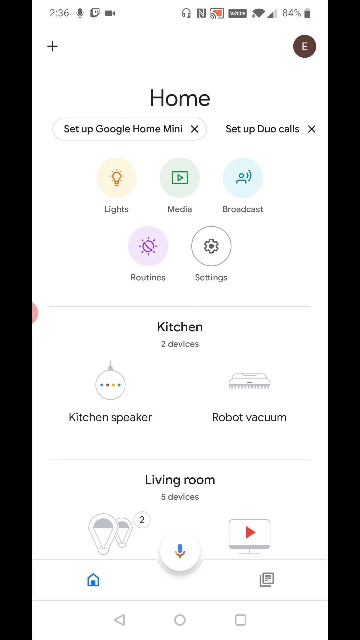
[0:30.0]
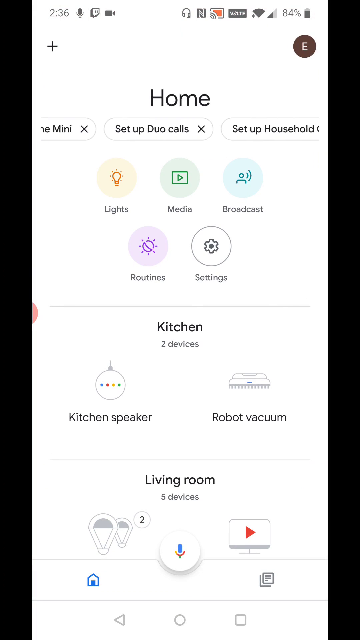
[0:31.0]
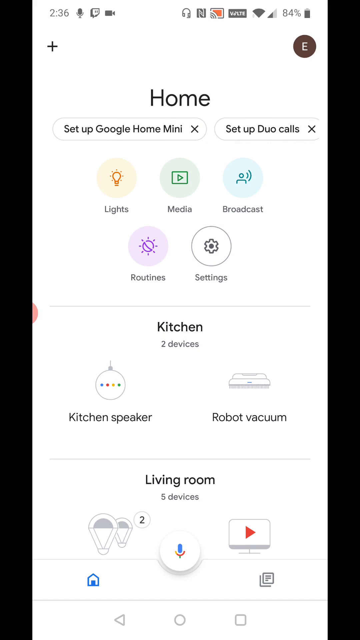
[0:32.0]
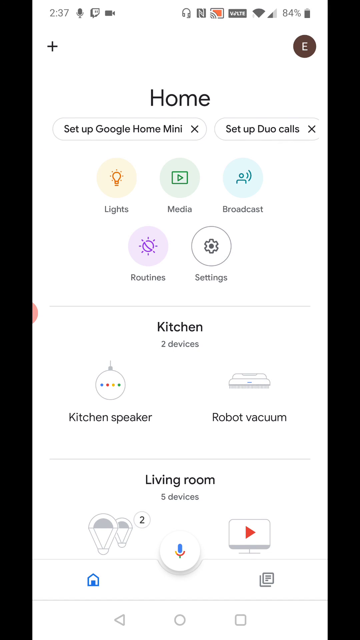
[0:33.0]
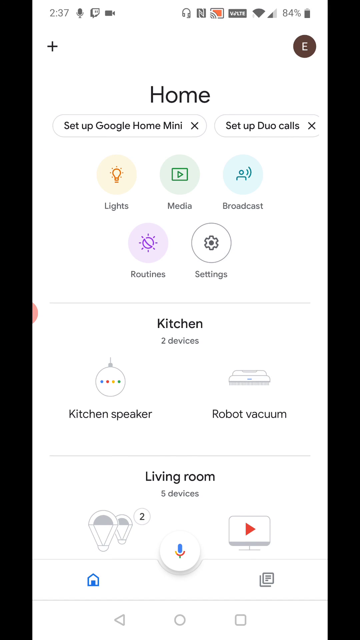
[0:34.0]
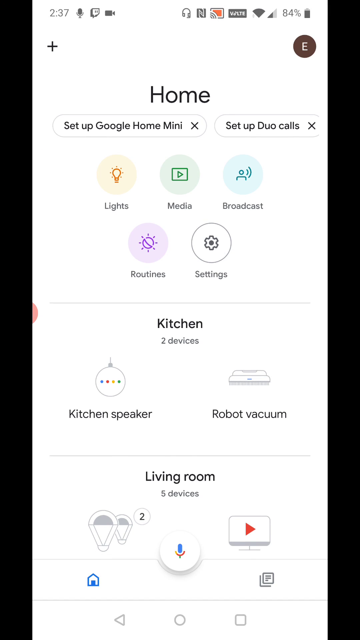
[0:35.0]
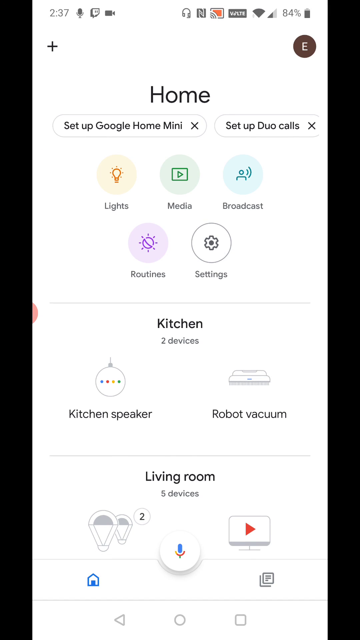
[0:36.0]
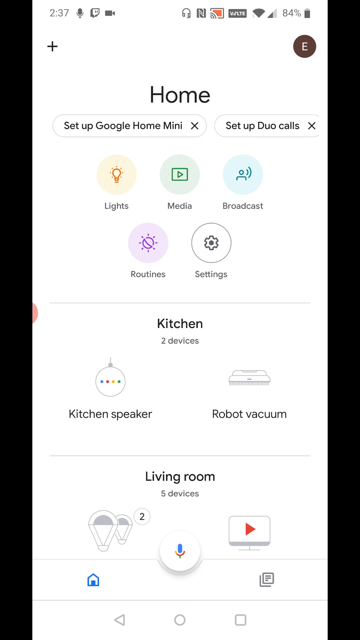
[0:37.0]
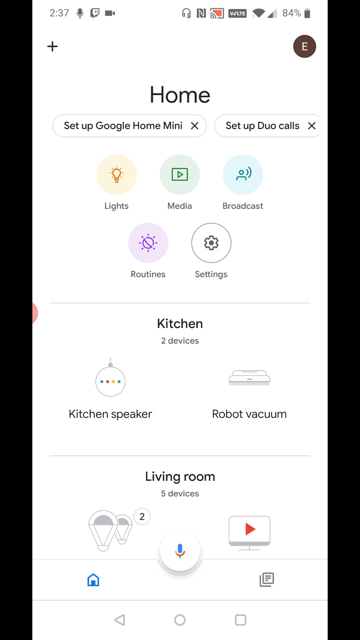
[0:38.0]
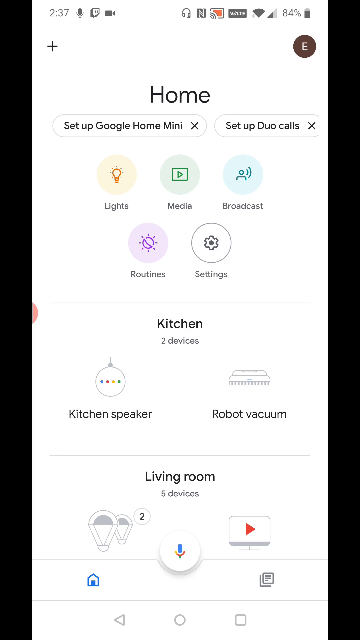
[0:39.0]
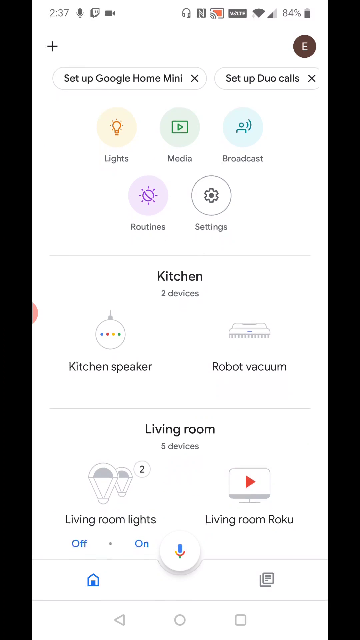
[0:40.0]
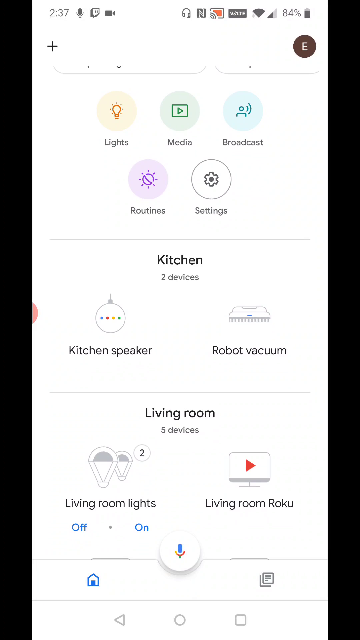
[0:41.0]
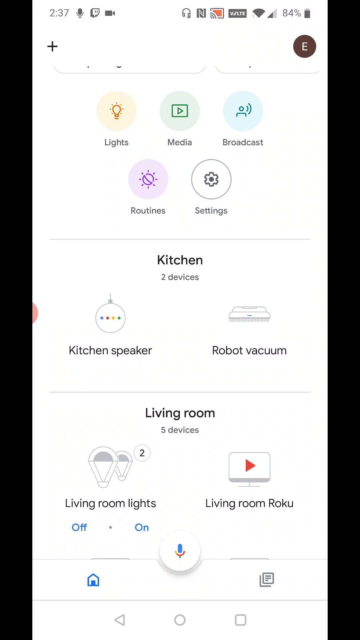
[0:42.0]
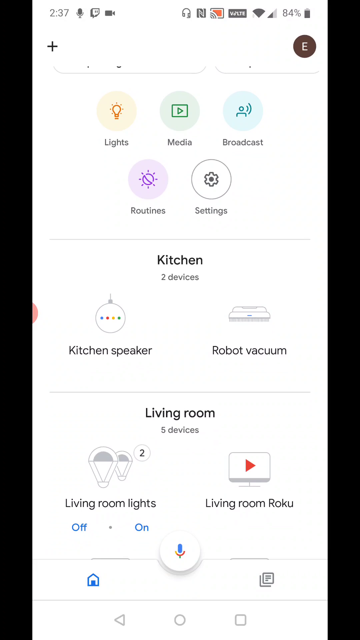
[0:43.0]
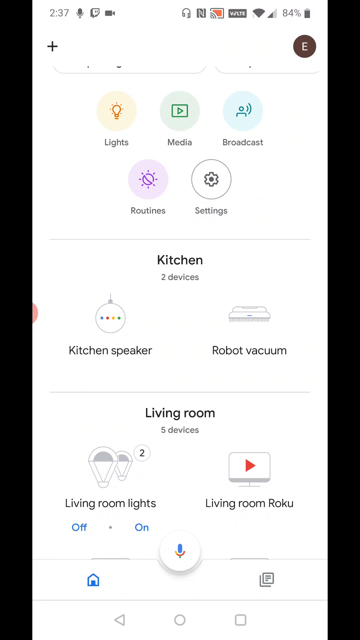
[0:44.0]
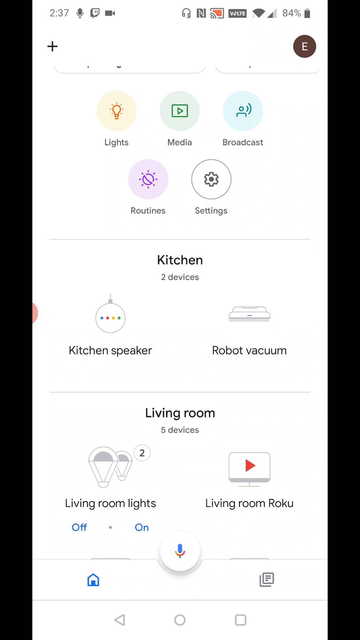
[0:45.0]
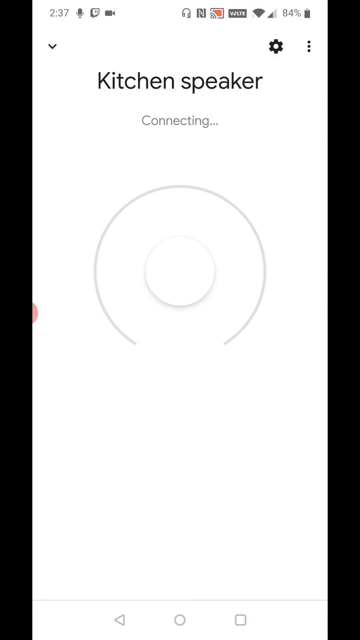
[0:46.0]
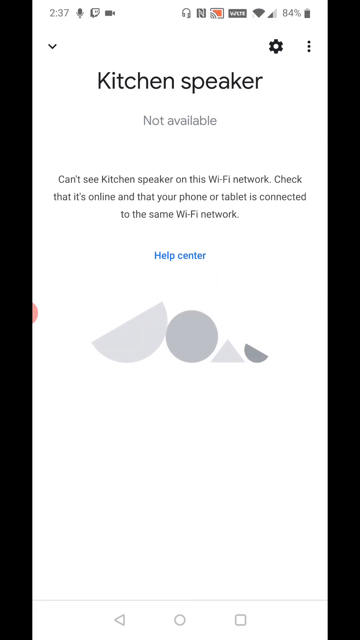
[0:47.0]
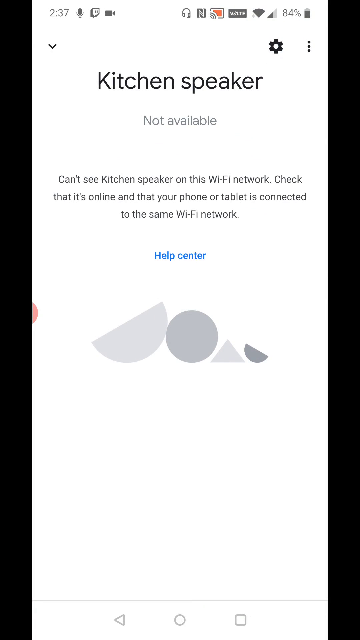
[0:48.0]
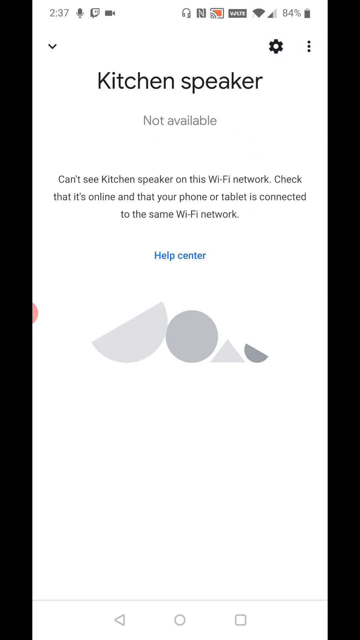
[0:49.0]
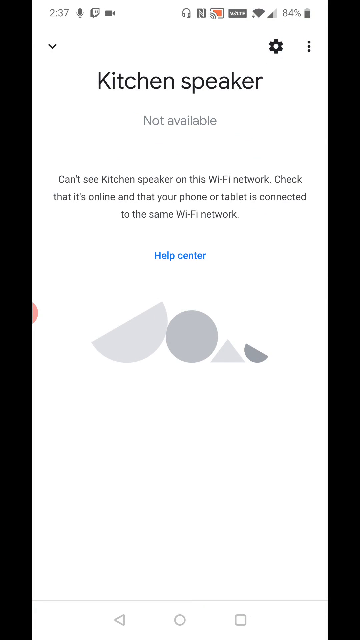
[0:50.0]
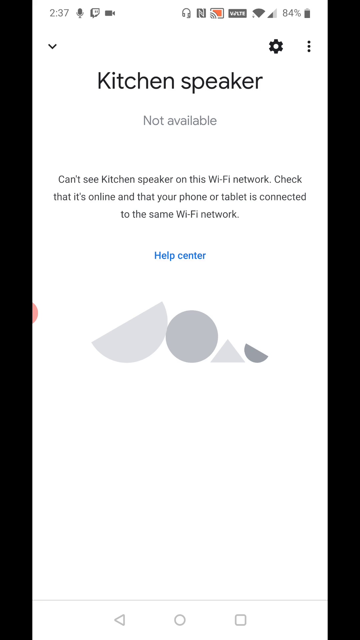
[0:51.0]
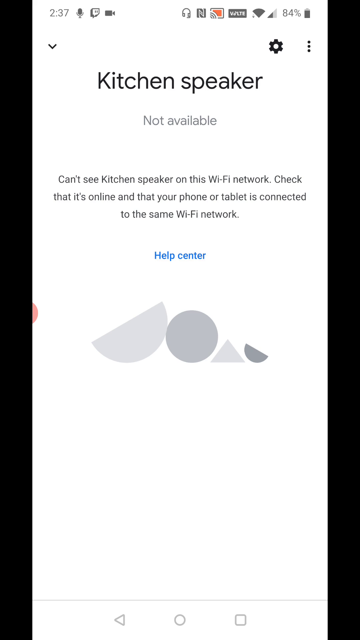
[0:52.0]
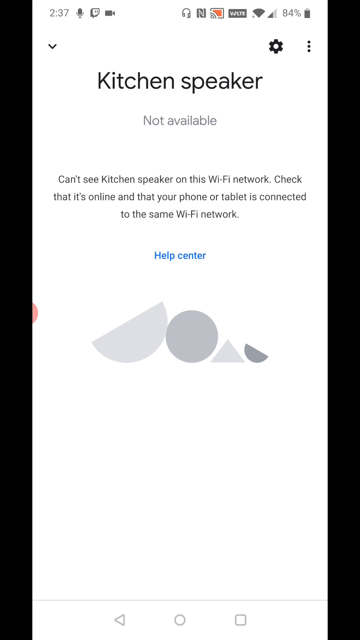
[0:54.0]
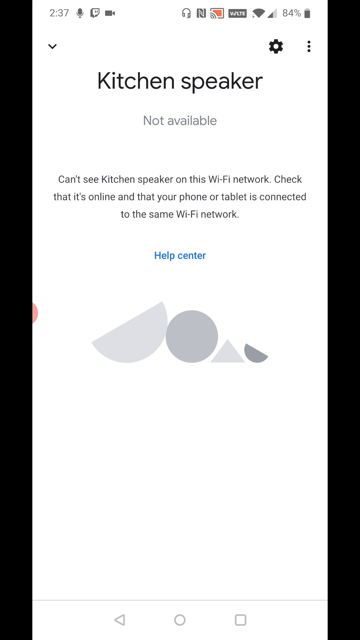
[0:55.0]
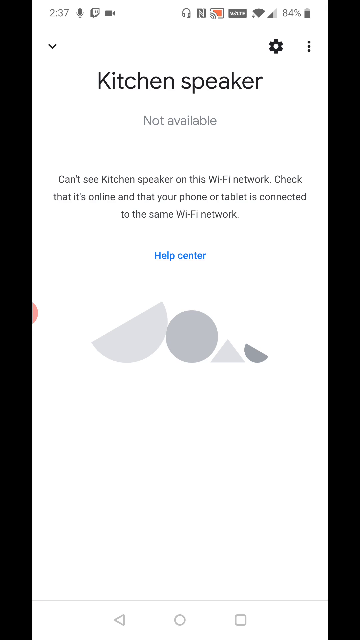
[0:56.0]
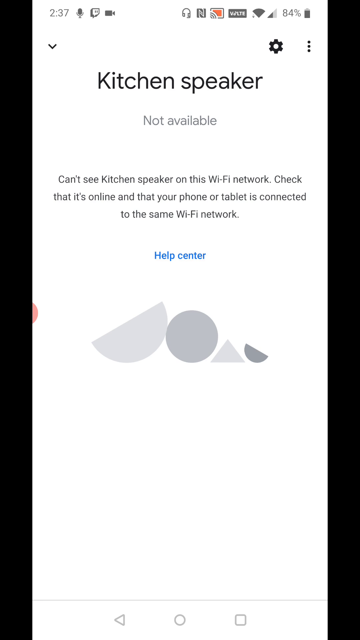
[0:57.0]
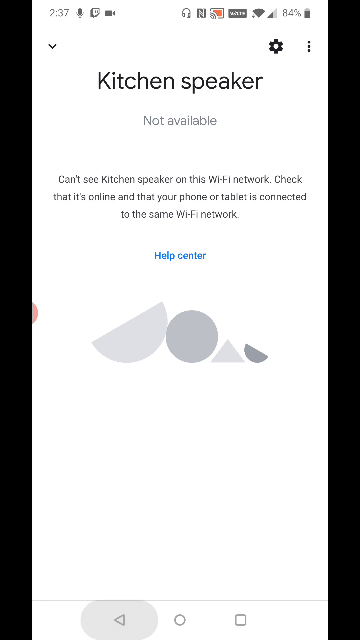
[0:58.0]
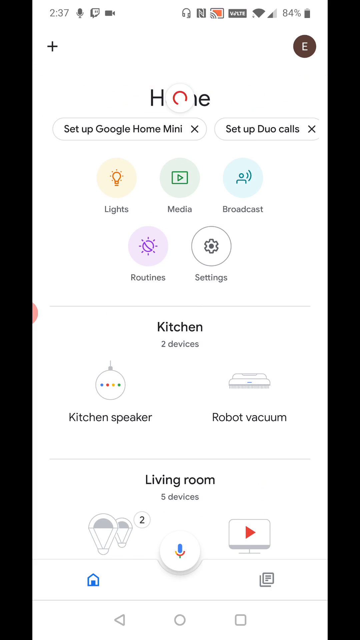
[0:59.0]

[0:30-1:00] The person pulls up the home screen, which says "set up Google Home Mini" and "set up dual calls". It lists the kitchen with two devices, "Kitchen speaker" and "robot vacuum", and the living room with five devices, though the living room devices are not visible yet. The person scrolls and stays on this screen for a while without doing much. Options read "Lights", "Media", "Broadcast", "Routine" and "Settings". They then open the kitchen speaker and try to connect, but a message says "not available" and "Can't see kitchen speaker on this Wi-Fi network. Check that it's online and that your phone or tablet is connected to the same Wi-Fi network."